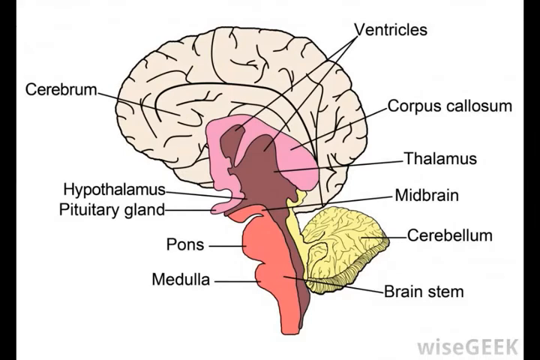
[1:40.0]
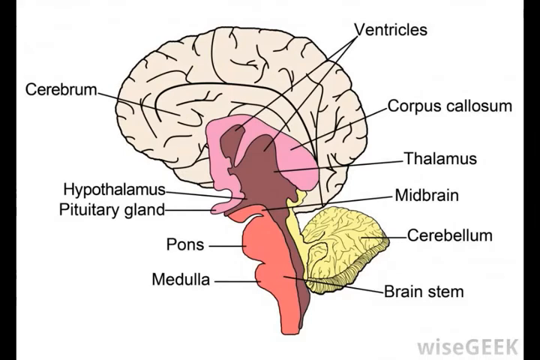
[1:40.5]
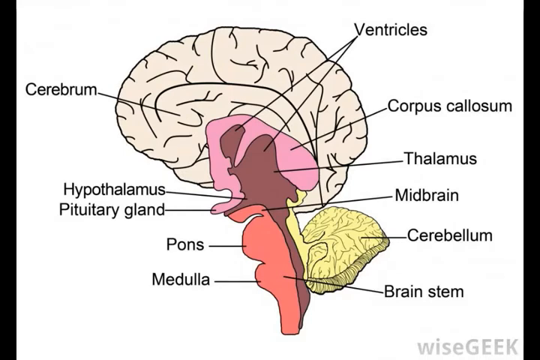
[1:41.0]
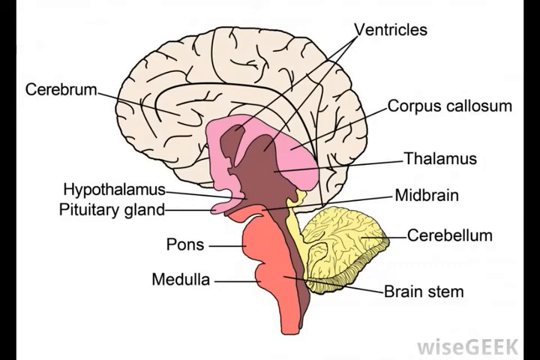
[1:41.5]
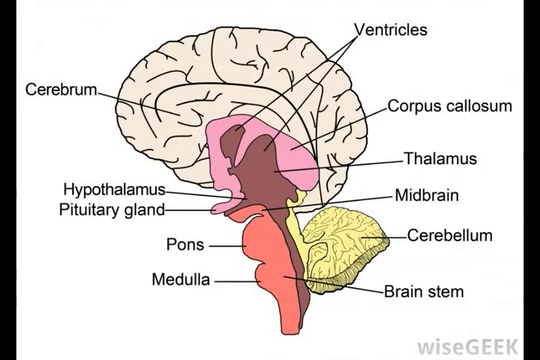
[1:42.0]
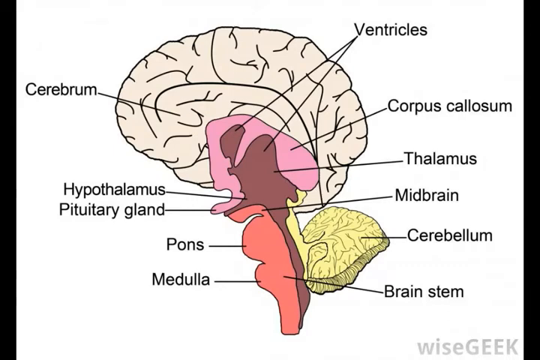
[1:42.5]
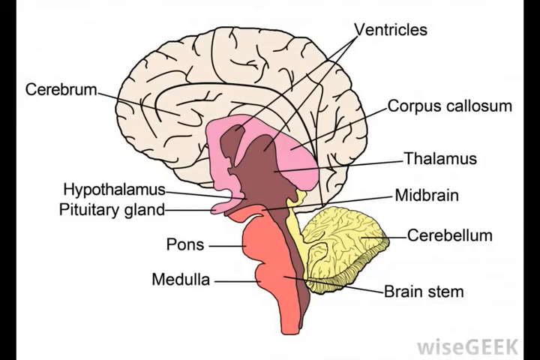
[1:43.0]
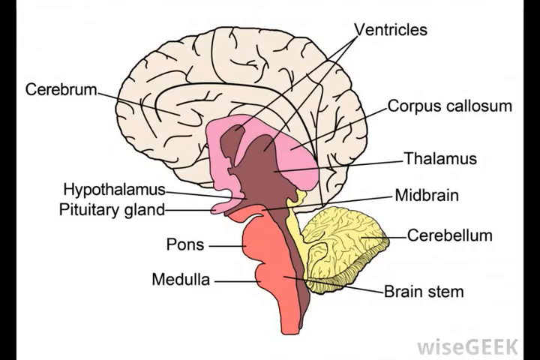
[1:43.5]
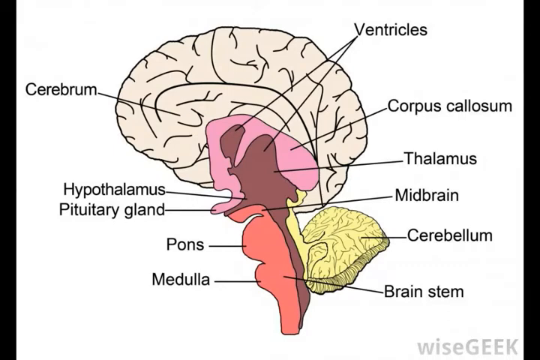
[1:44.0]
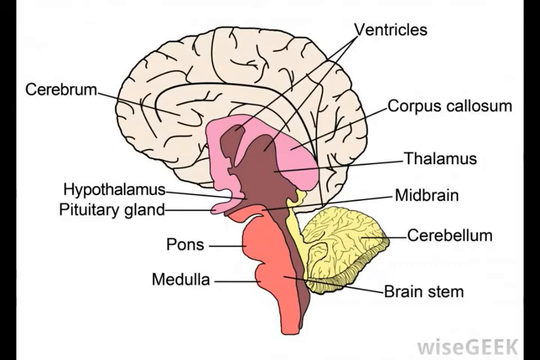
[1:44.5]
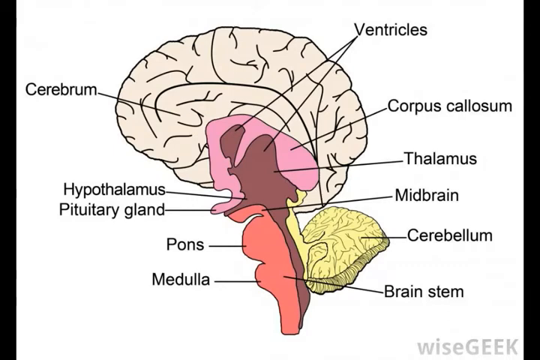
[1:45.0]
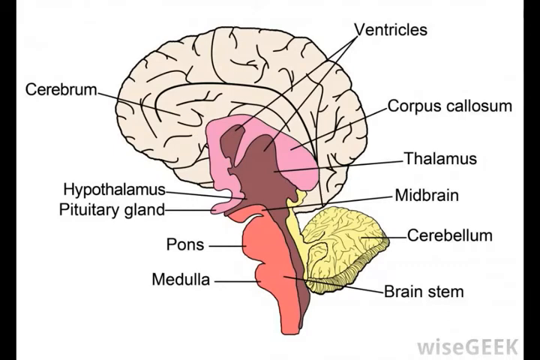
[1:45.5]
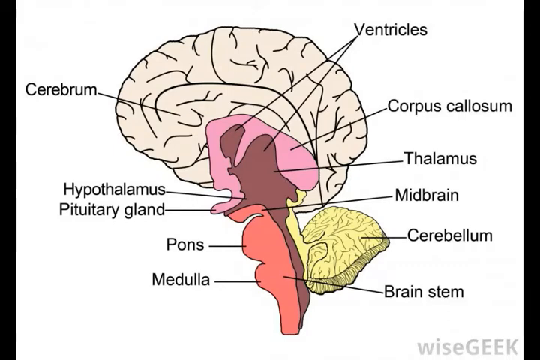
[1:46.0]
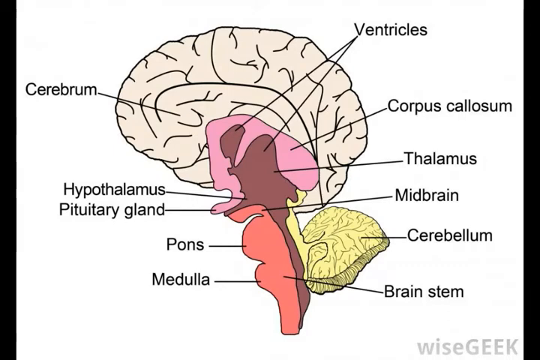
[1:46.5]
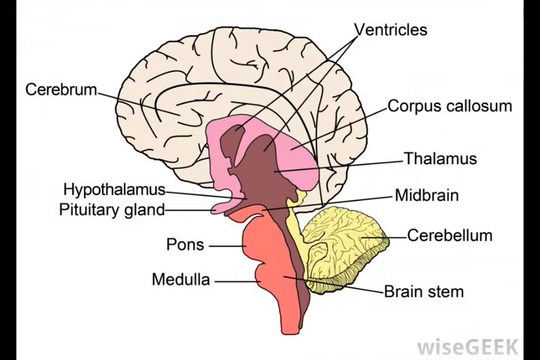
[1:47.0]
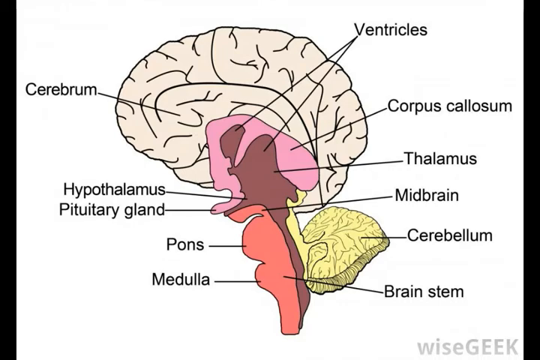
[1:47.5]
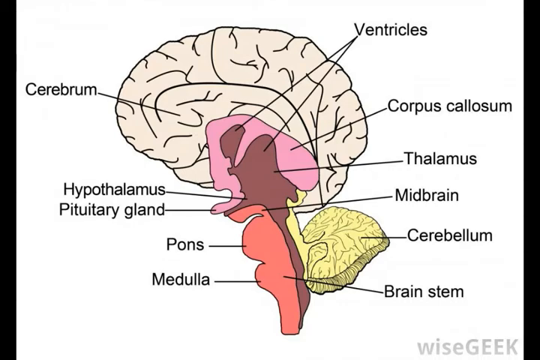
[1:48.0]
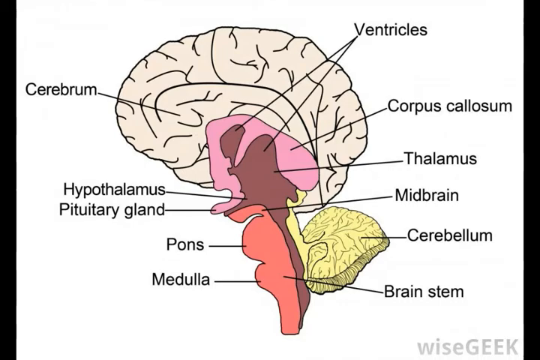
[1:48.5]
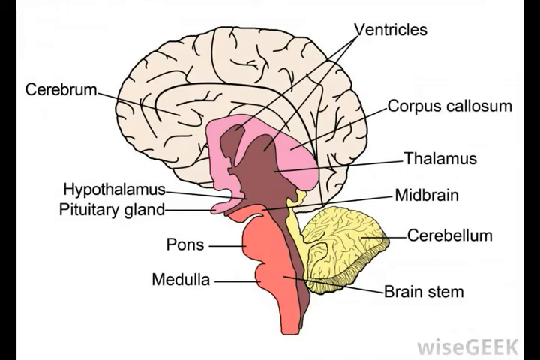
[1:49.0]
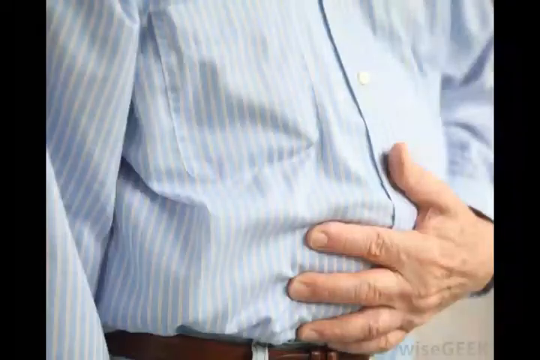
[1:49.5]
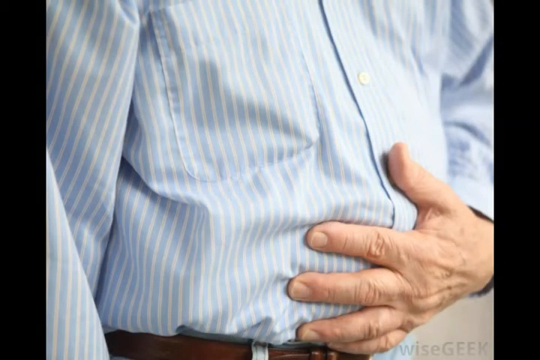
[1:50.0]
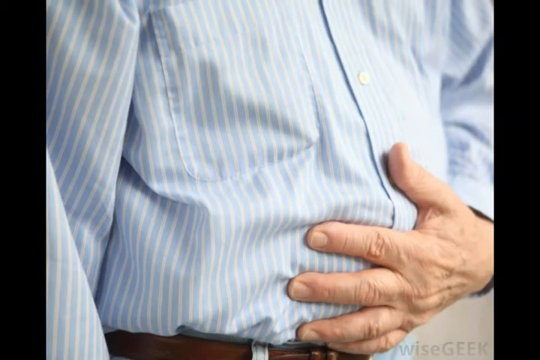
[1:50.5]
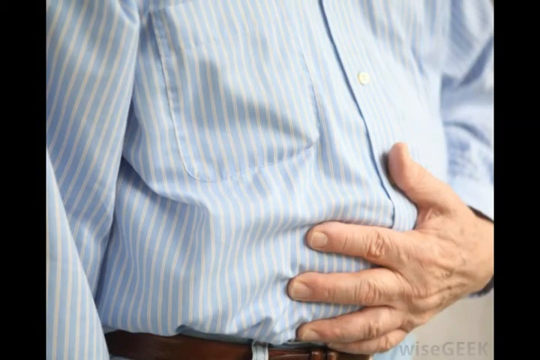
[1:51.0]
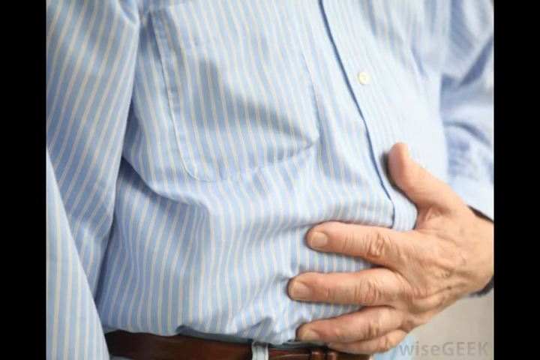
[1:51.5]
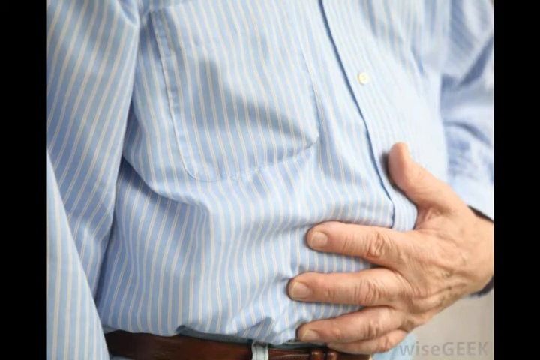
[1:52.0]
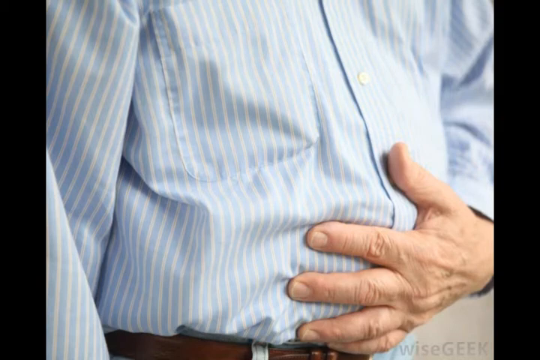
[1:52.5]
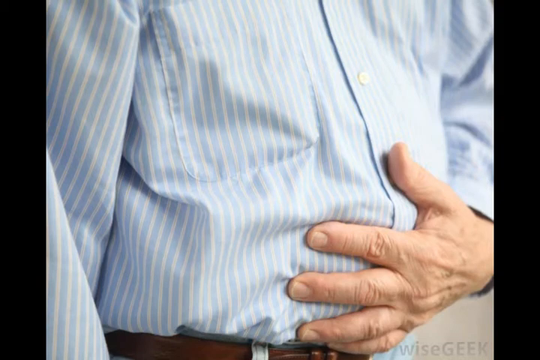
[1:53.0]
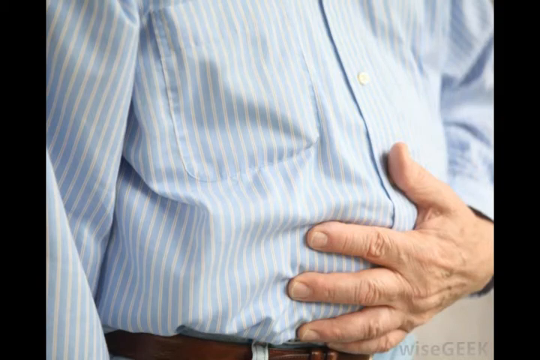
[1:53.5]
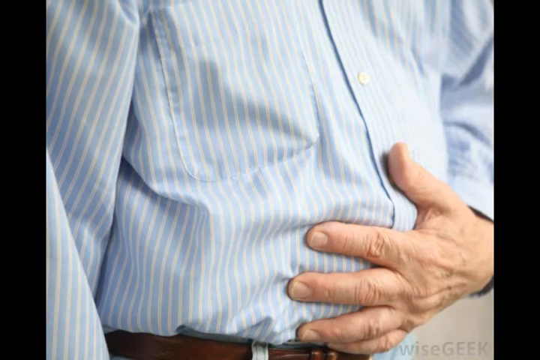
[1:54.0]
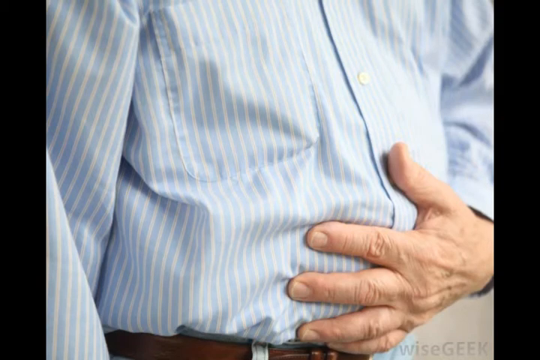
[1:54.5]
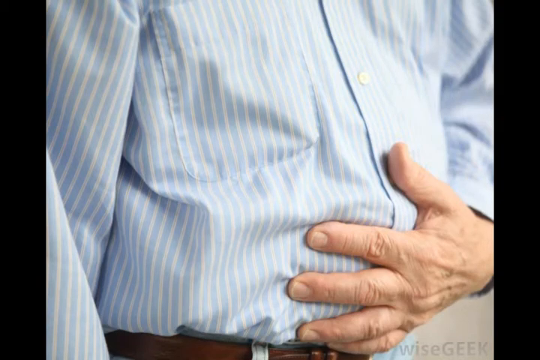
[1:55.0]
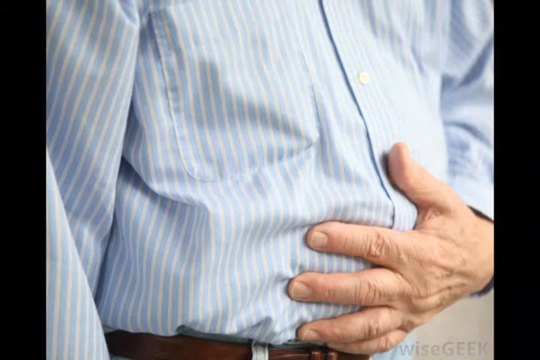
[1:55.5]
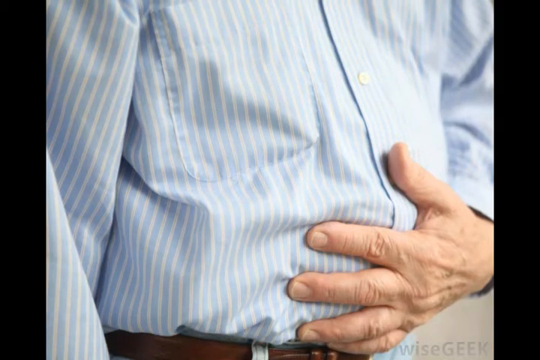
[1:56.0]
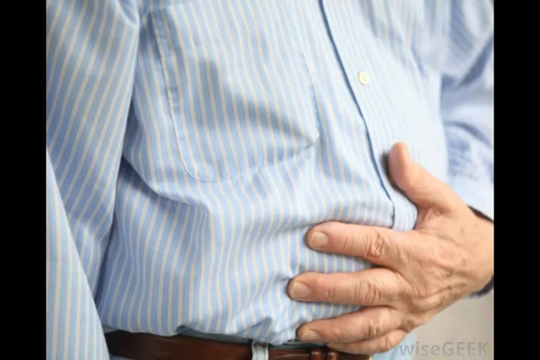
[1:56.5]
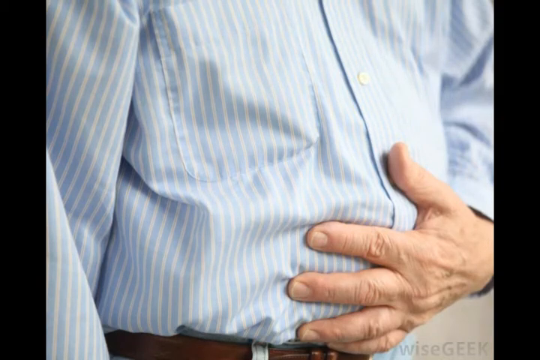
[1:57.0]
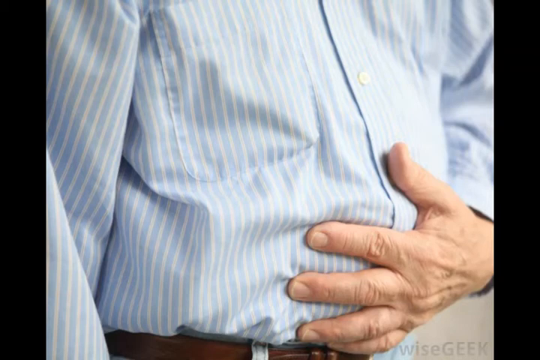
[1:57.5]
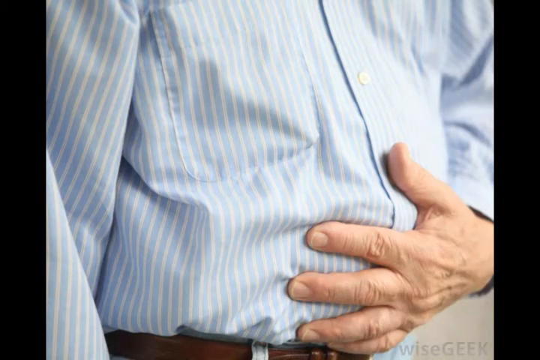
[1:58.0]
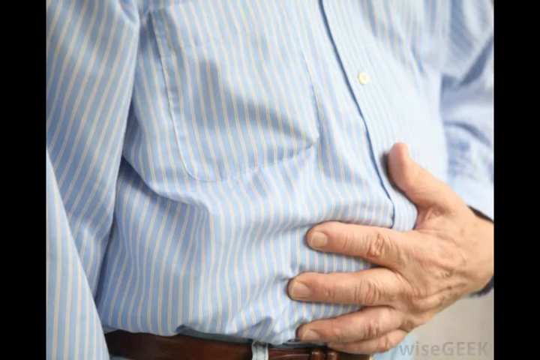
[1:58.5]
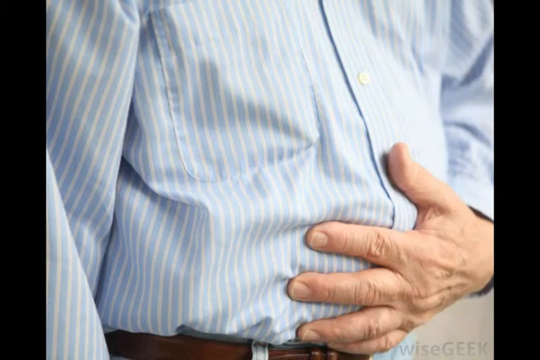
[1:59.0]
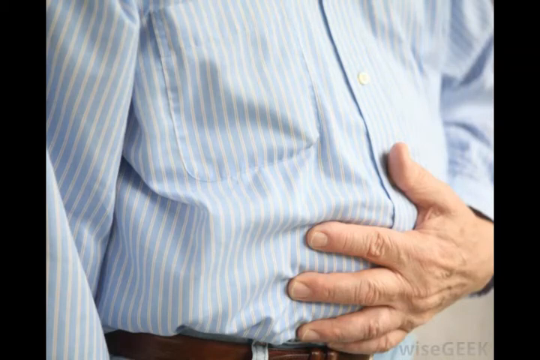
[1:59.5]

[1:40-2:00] A diagram of the brain shows its regions, including the cerebrum, ventricles, corpus callosum, hypothalamus, pituitary gland, pons, medulla, brain stem, cerebellum, midbrain and thalamus. The main gray matter is on top, the corpus callosum is below in a kind of pink, the thalamus is a reddish pink, the pons and medulla are a bright salmon pink, and the cerebellum is yellow. The diagram appears to show the relative positions of these parts: the brain stem at the bottom, the cerebellum attached to the back of the brain stem, the midbrain in the middle, the cerebrum on top with the ventricles in the middle, and the pituitary gland and hypothalamus also in the middle. In the second half, an apparent man in a white pinstripe shirt, with hands that look quite masculine and wrinkled, holds his stomach as though experiencing gastric pain.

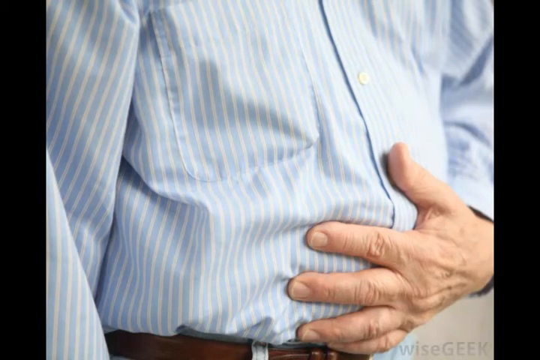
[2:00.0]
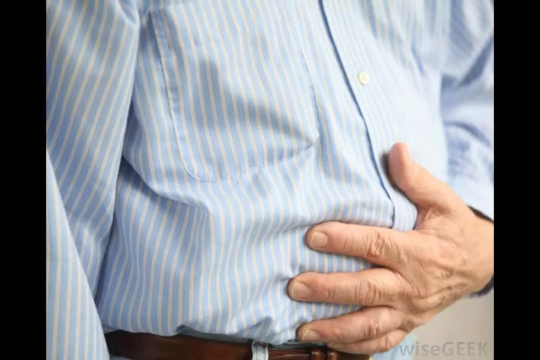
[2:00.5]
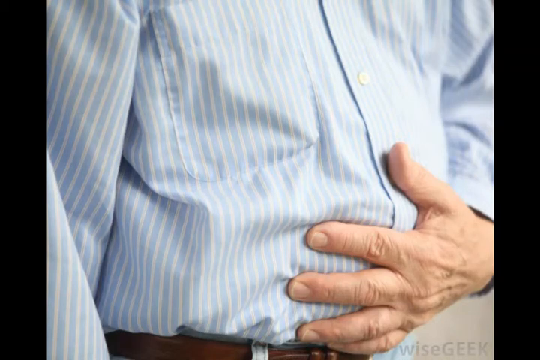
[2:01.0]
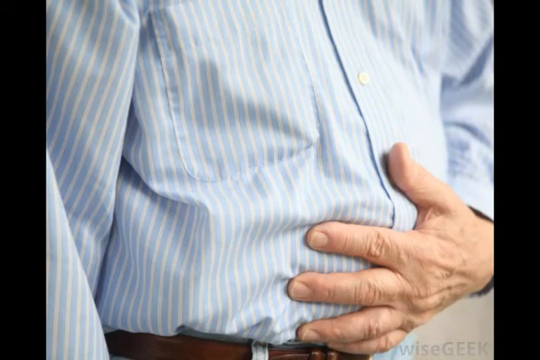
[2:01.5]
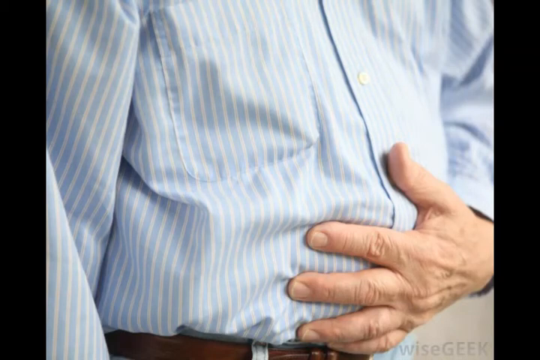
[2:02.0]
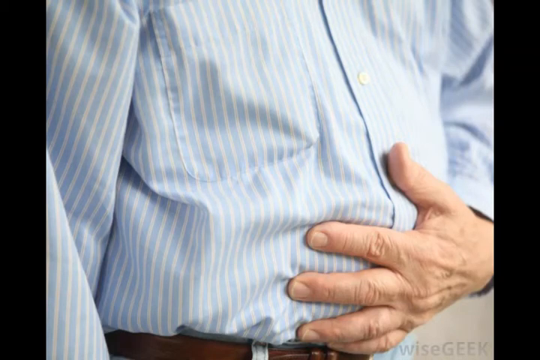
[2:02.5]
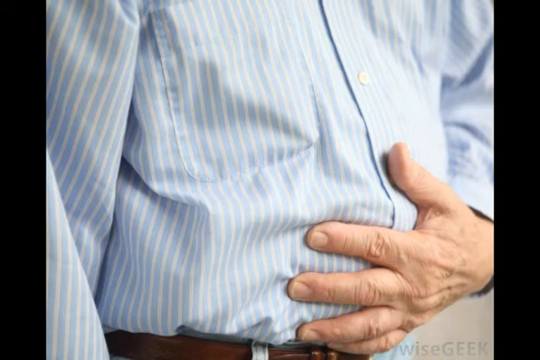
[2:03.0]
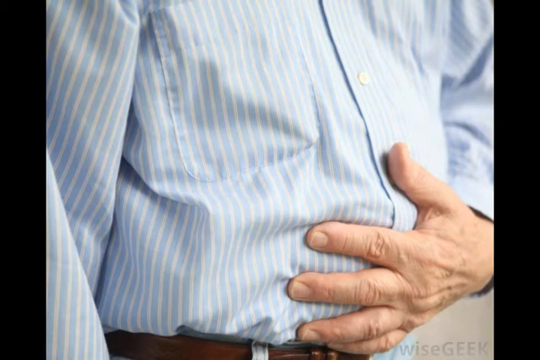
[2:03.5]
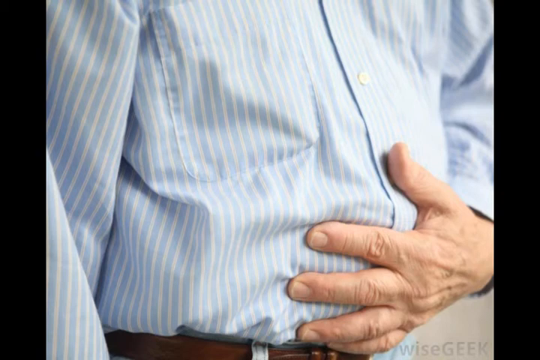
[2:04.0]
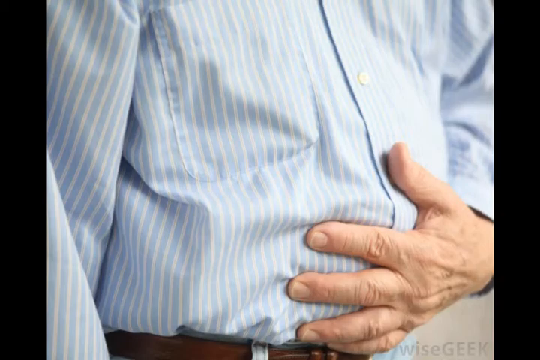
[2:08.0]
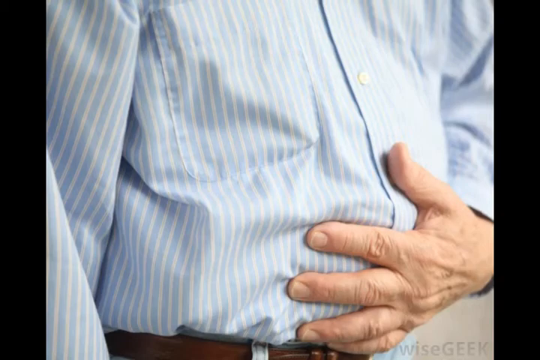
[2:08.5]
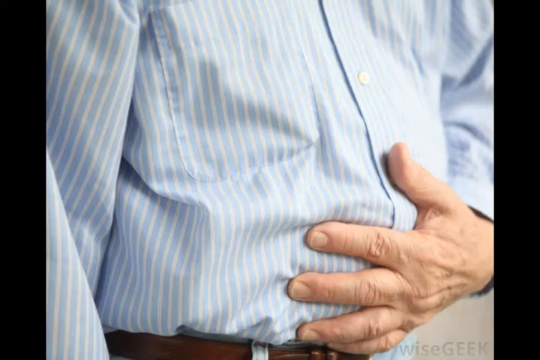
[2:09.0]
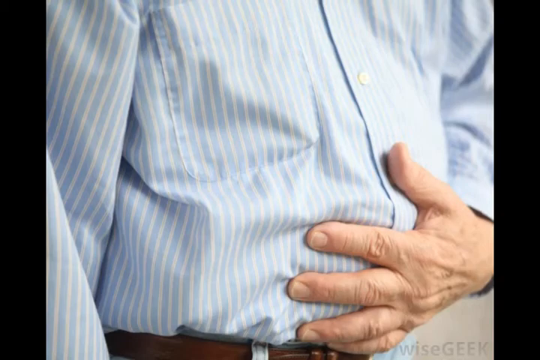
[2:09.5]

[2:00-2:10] First, an elderly or perhaps middle-aged man, judging by the wrinkles on his hands, wears a light blue pinstripe shirt and stands placing his hands over his stomach as though comforting himself from some pain. In the second half, a woman, probably in her early 40s, uses a blood pressure monitor, placing the cuff around her right arm just above the elbow and operating the machine. She sits on a white sofa, with a white bookshelf in the background and a white door behind. The blood pressure machine sits on a table in front of her.